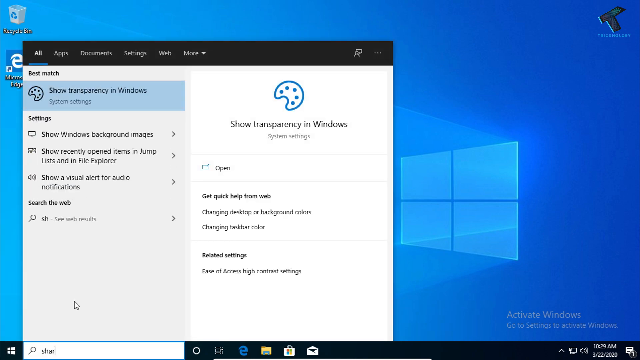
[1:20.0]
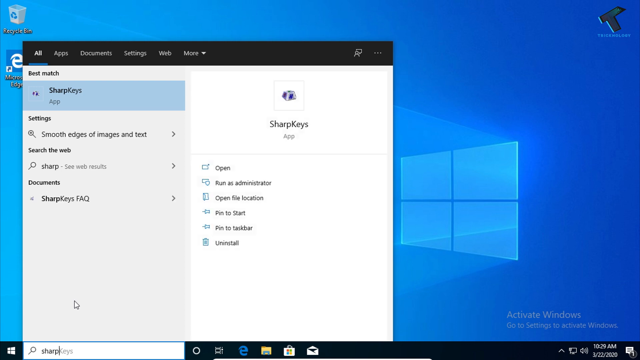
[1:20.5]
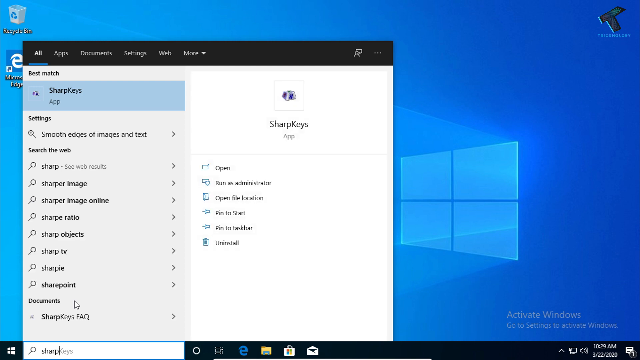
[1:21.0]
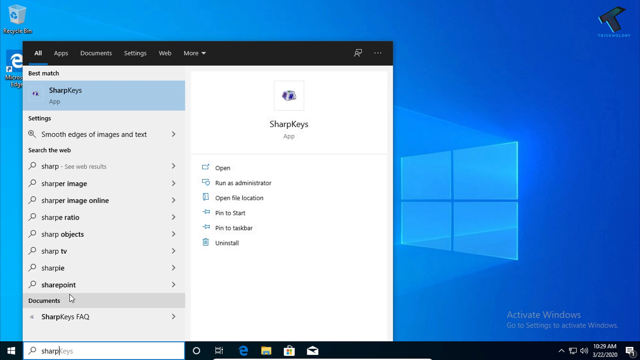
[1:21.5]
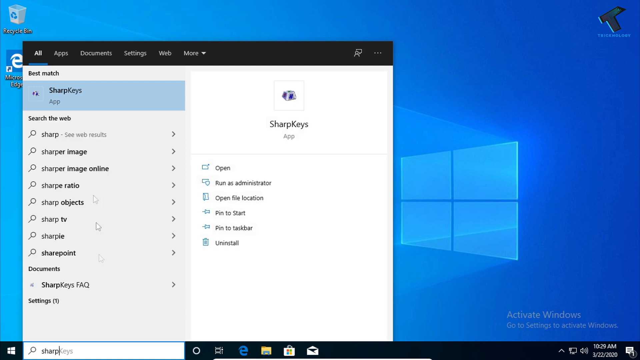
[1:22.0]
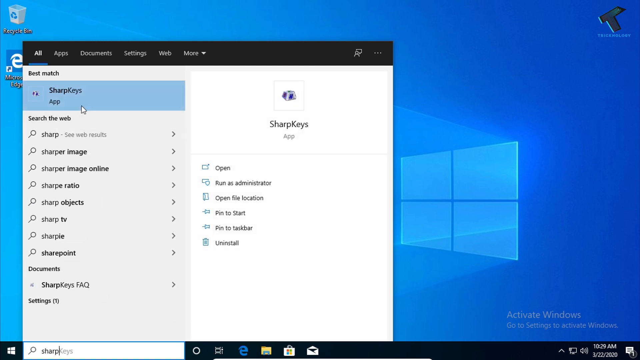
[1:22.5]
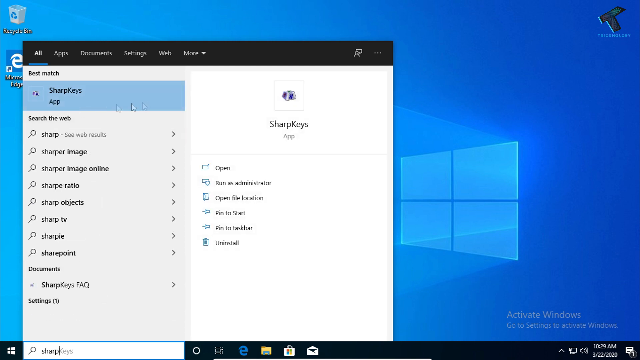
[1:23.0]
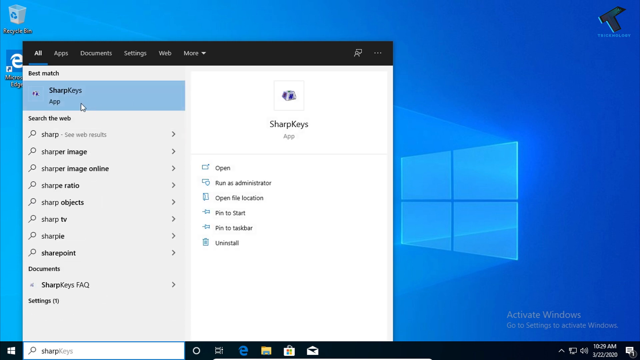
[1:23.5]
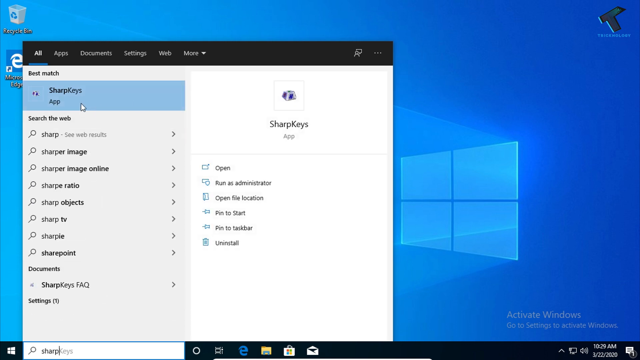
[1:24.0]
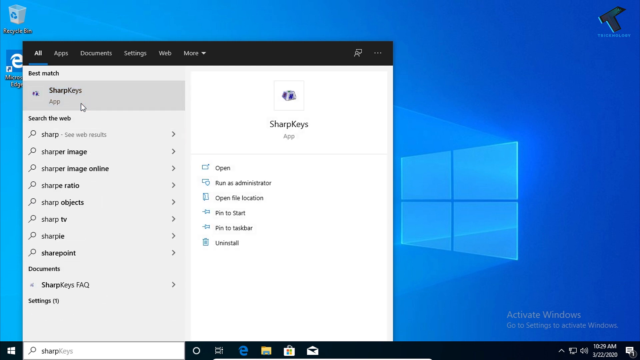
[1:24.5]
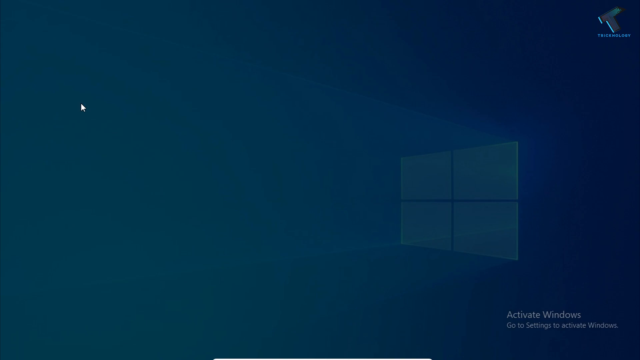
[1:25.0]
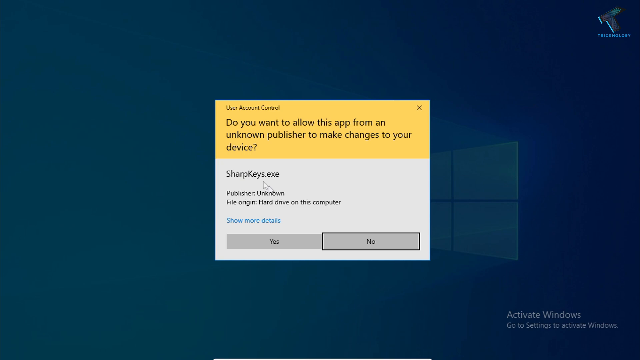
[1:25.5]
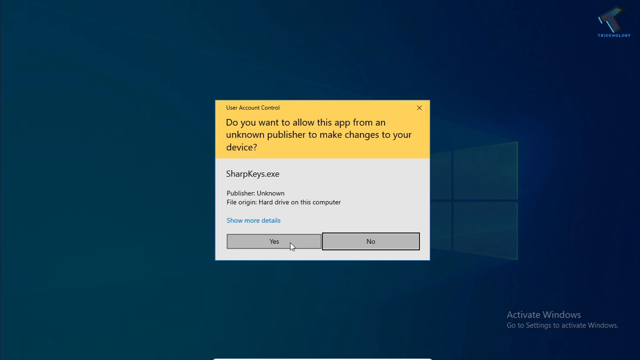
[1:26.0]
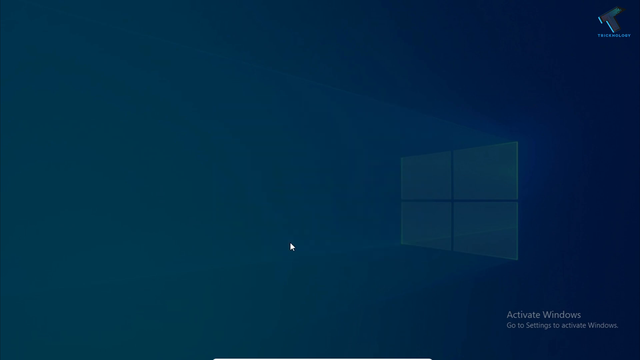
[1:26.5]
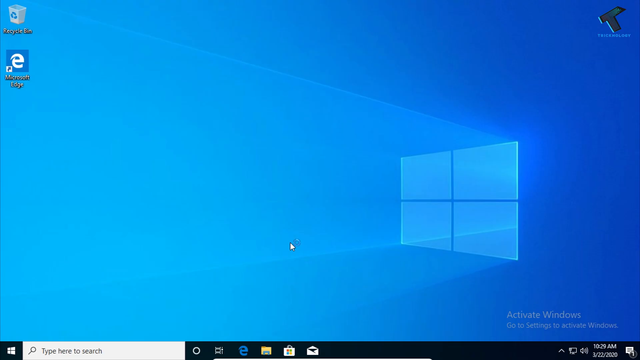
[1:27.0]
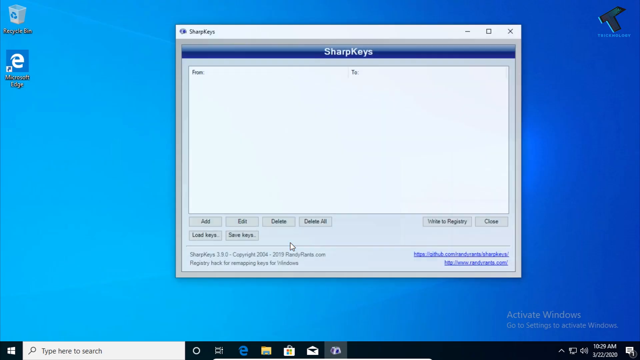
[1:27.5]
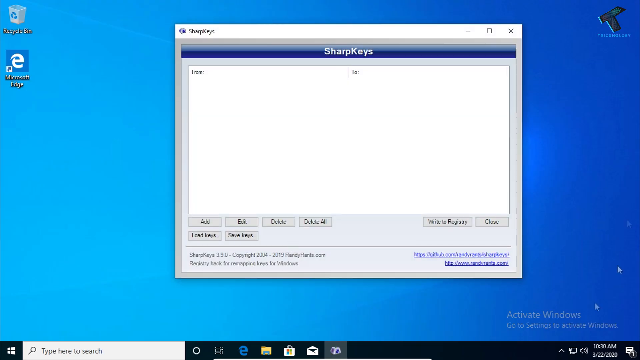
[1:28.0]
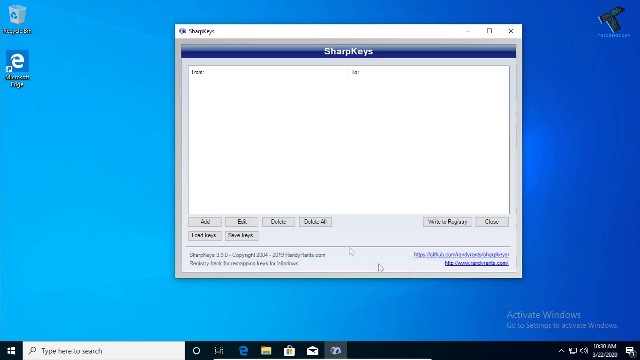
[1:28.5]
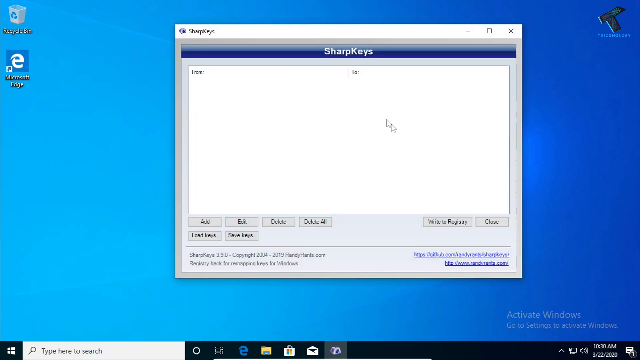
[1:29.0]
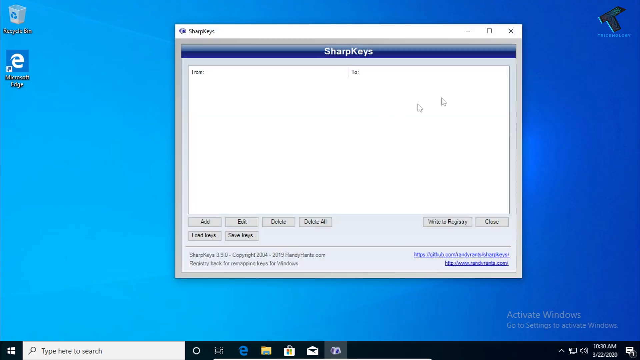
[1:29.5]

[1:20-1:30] The user appears to be opening the newly downloaded program, apparently by searching for it in Windows search. A Windows screen shows the SharpKeys app, with what look like settings below, including "smooth edges of images and text" and "search the web". Below the logo and the words "SharpKeys app" are options for open, run as an administrator, open file location, pin to start, pin to taskbar, and uninstall.